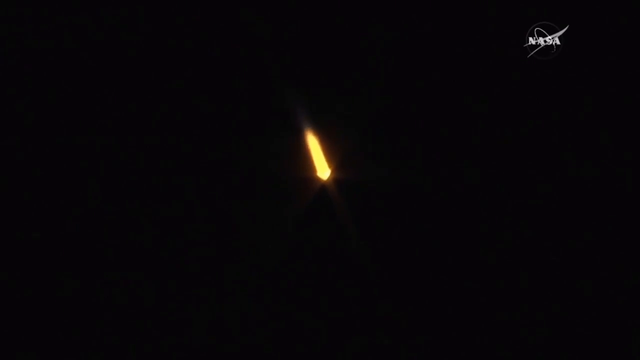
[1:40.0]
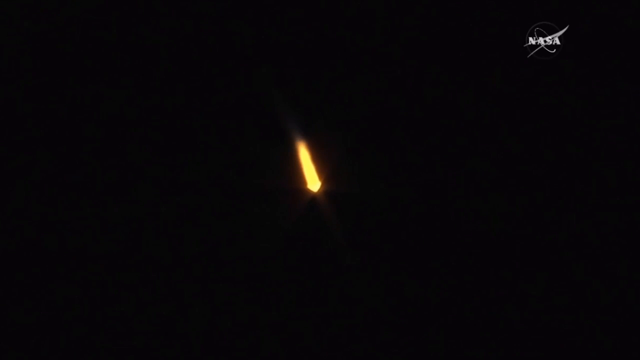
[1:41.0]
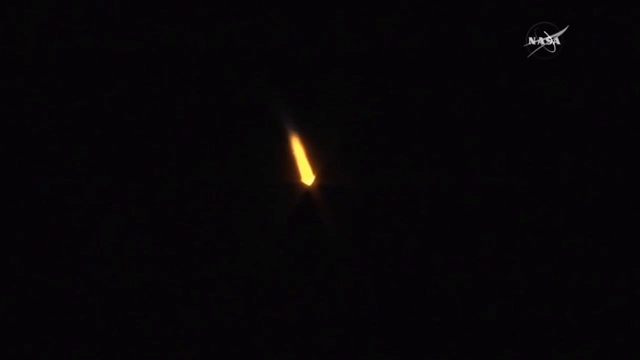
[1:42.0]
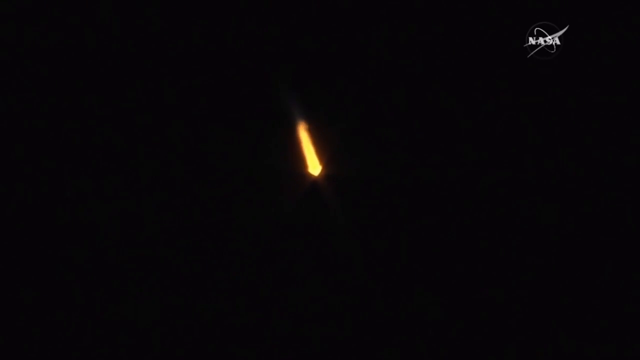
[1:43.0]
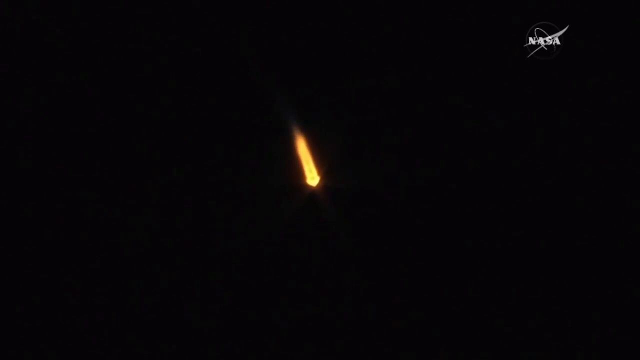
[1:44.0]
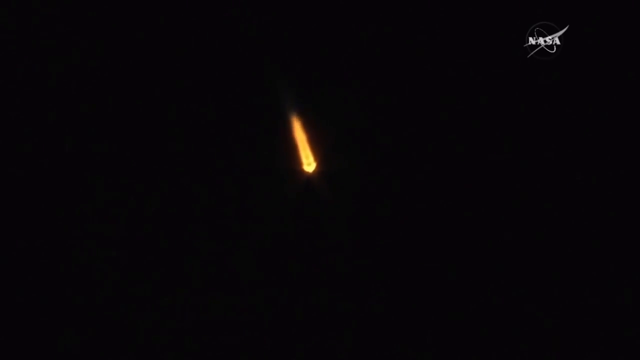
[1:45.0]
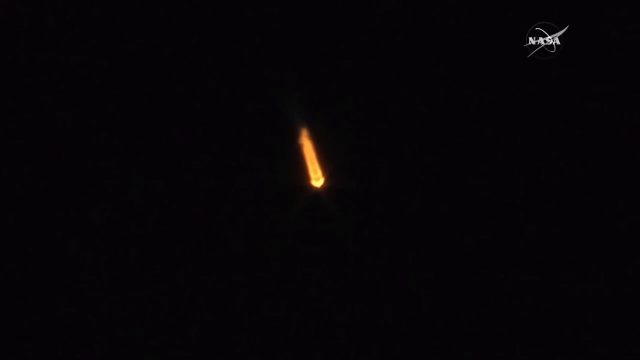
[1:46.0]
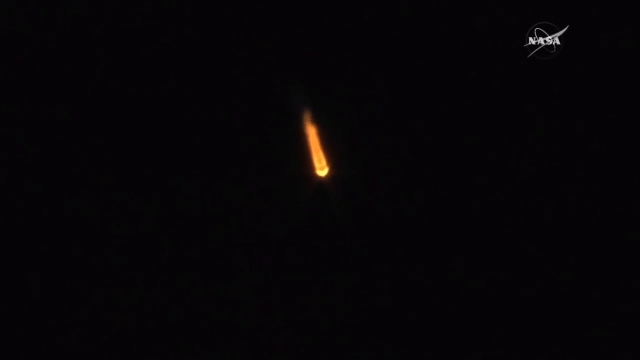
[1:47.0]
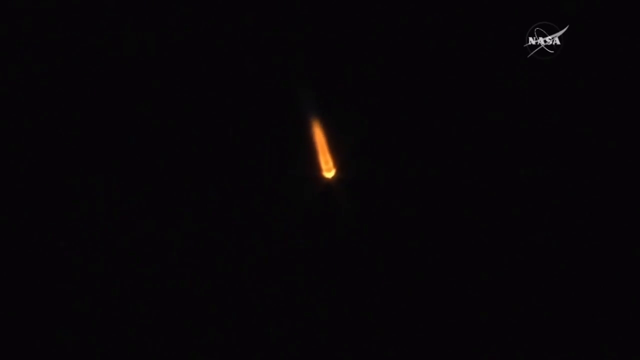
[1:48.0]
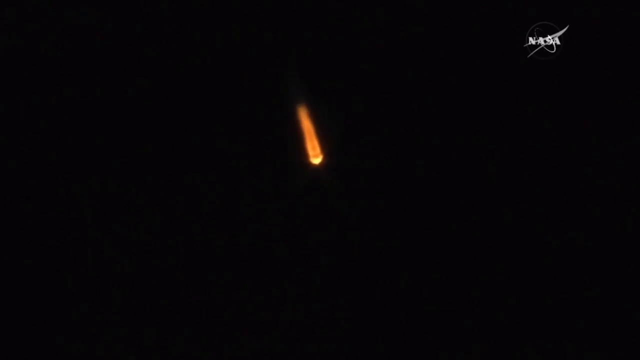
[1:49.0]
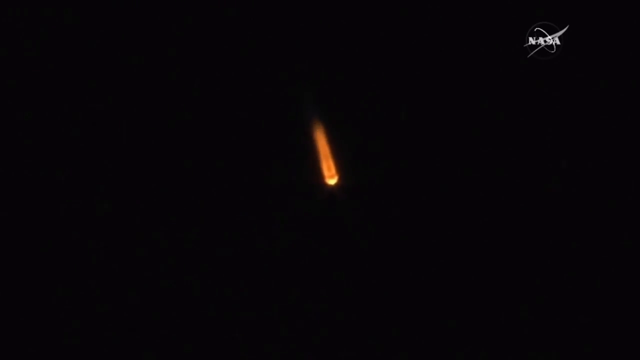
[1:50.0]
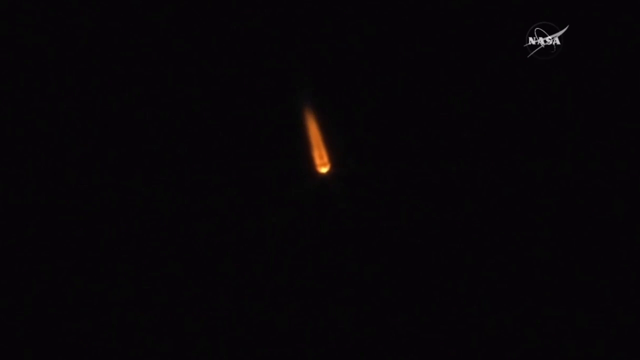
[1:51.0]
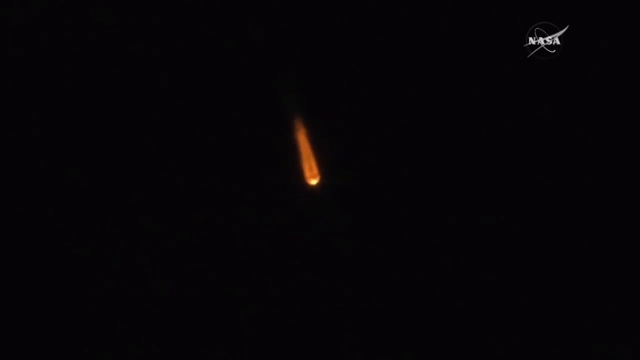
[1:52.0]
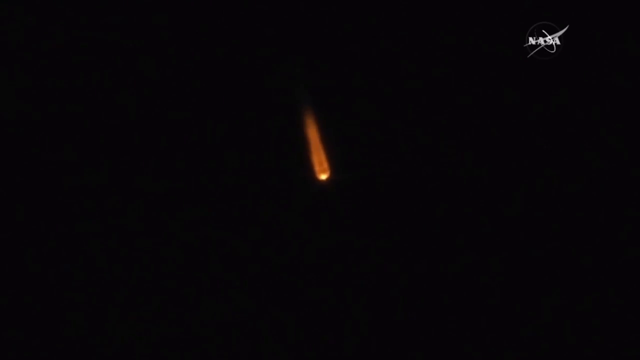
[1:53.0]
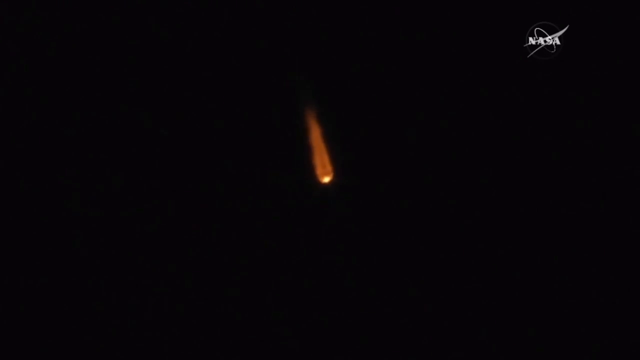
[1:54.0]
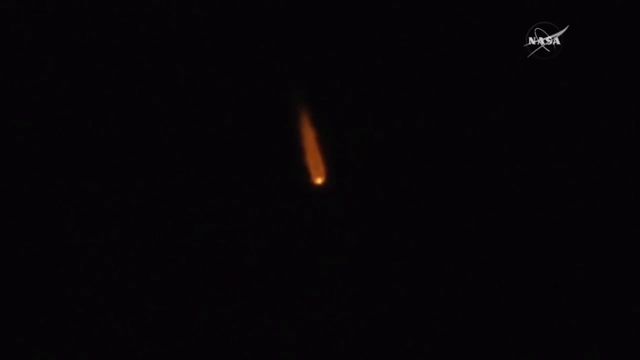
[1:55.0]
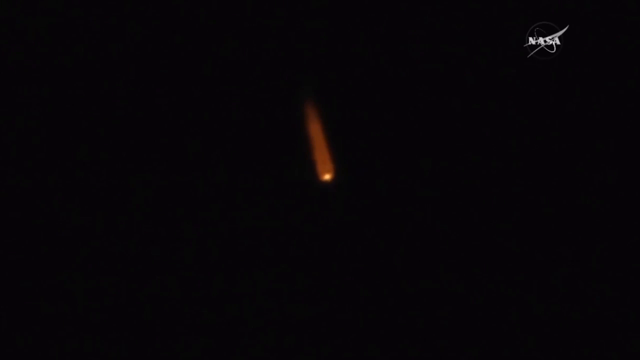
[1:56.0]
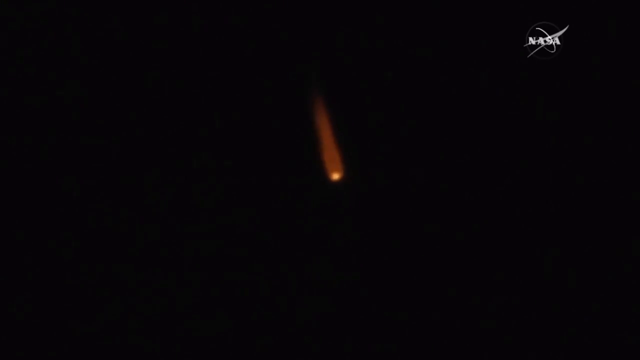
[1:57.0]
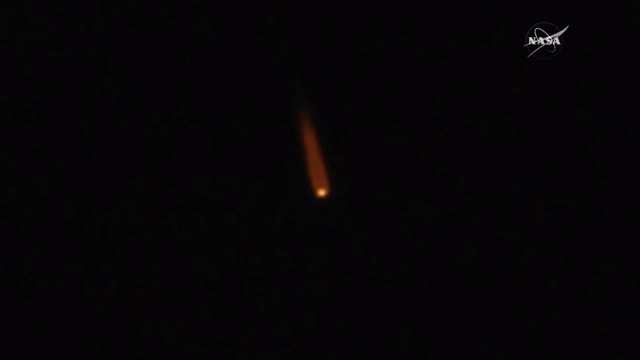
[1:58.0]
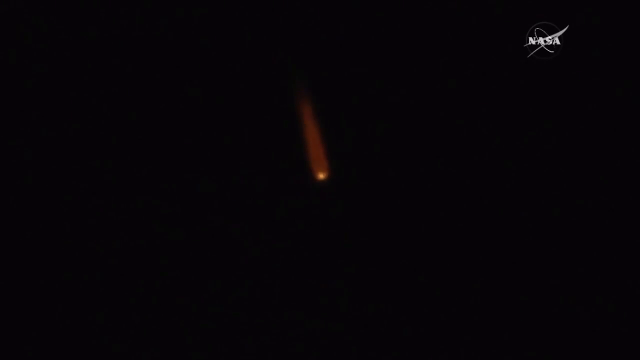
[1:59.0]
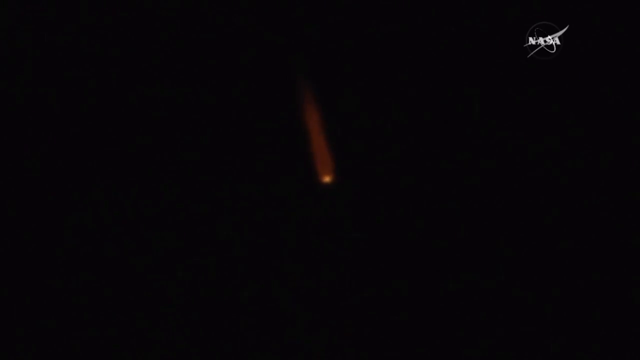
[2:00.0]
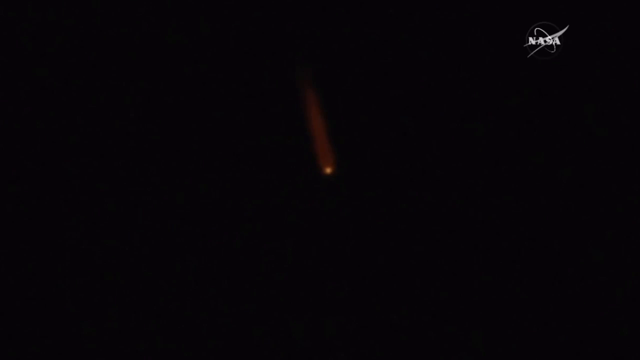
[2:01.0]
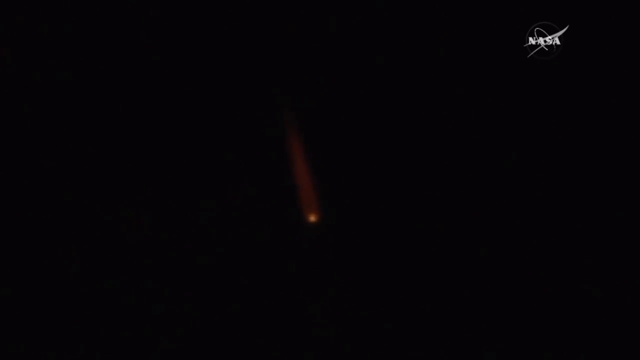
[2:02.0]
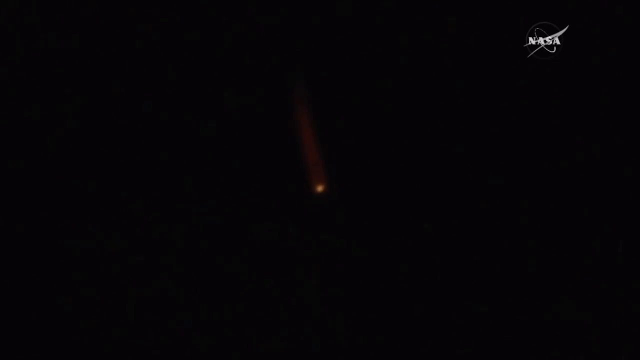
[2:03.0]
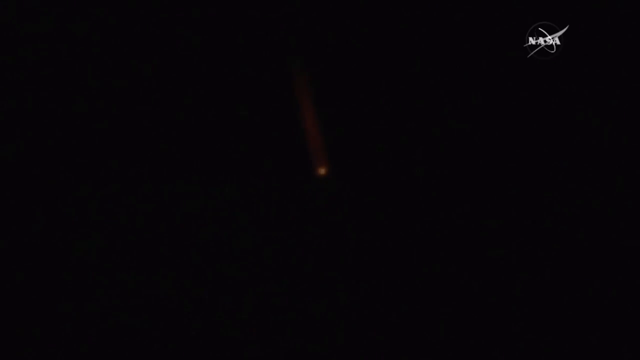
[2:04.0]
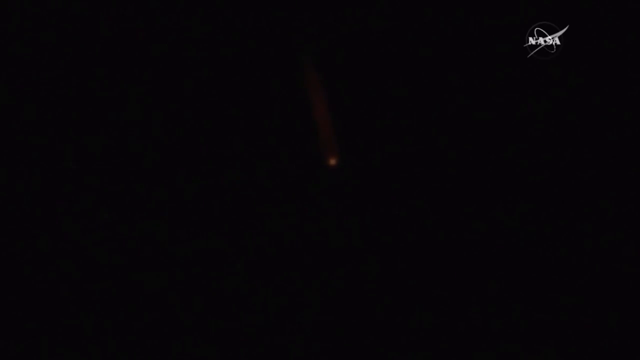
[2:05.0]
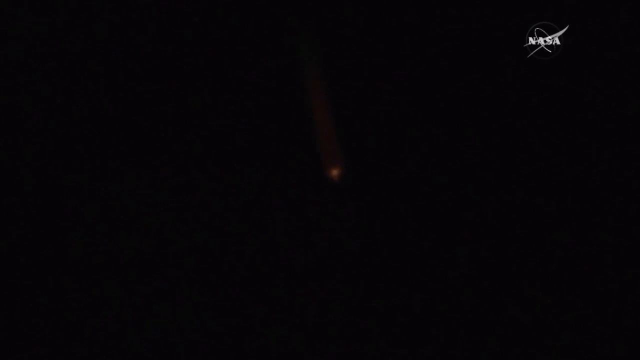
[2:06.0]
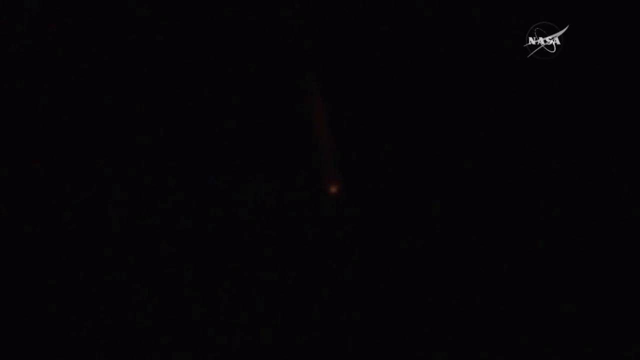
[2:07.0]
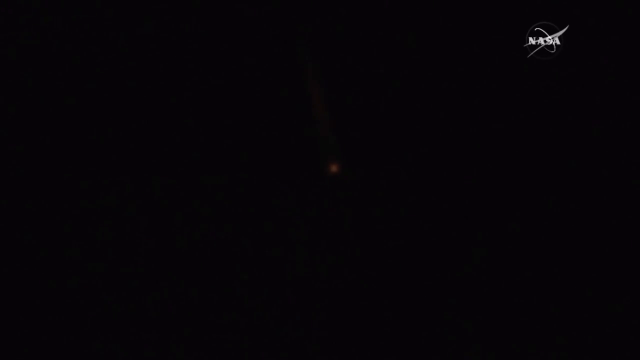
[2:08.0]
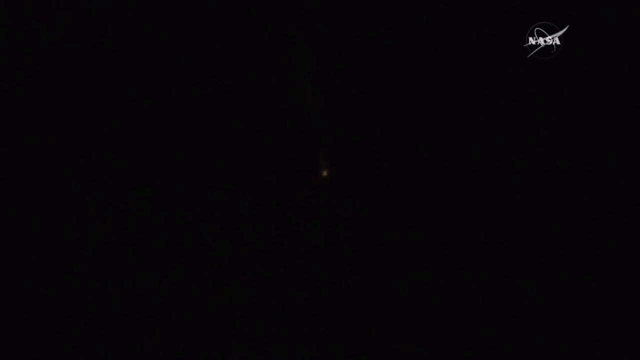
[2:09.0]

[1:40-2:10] A light comes straight down toward Earth against a pitch-black sky, looking like a shooting star or a space shuttle completely in flames coming back down. "NASA" appears at the top of the screen. As it descends, the light dims as if burning out, and by the end of the shot it disappears completely.